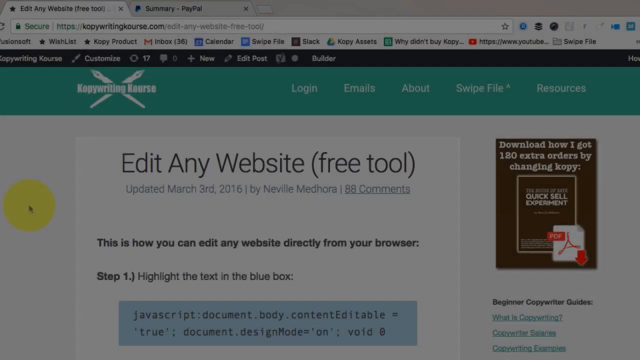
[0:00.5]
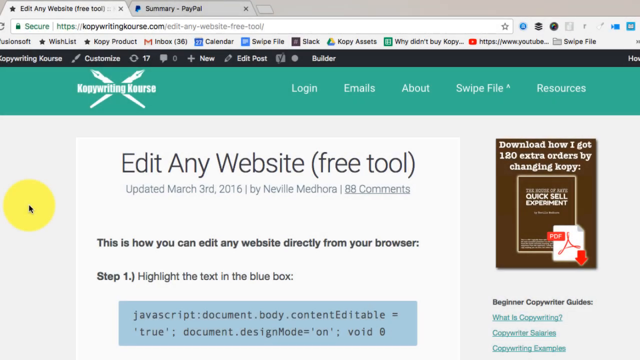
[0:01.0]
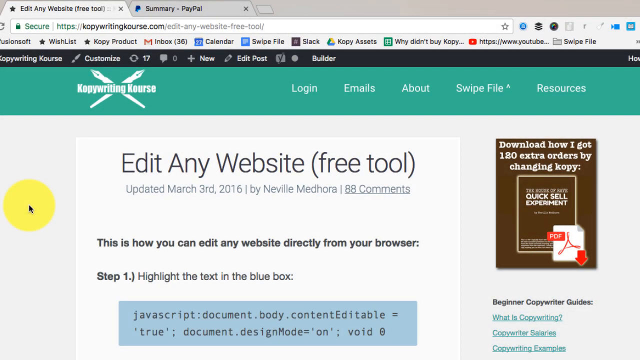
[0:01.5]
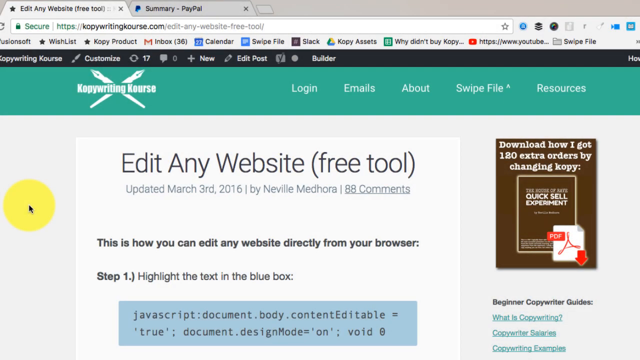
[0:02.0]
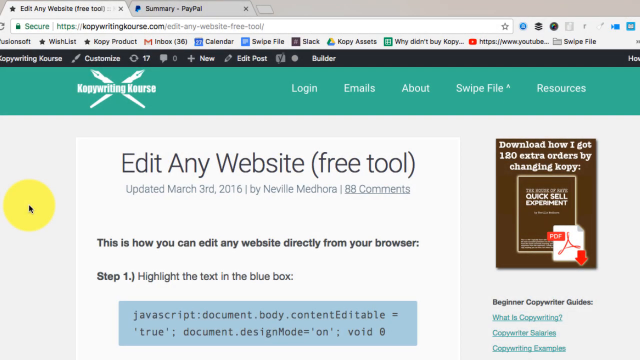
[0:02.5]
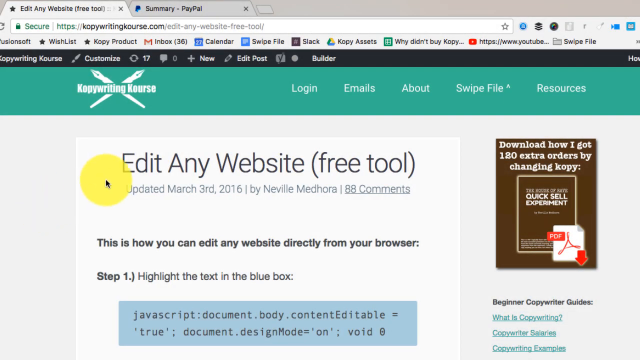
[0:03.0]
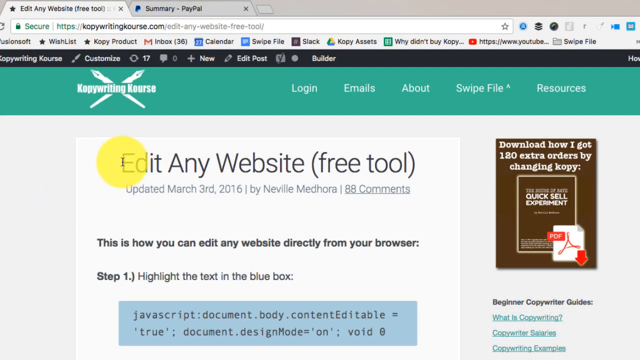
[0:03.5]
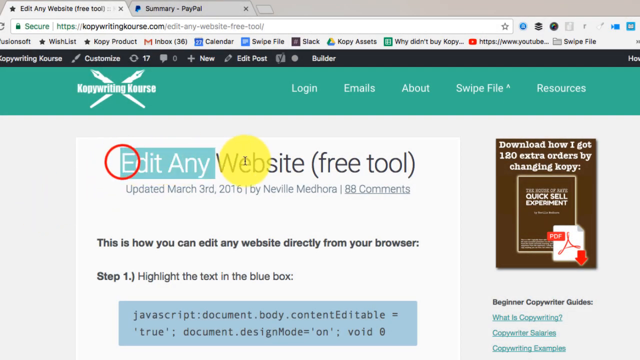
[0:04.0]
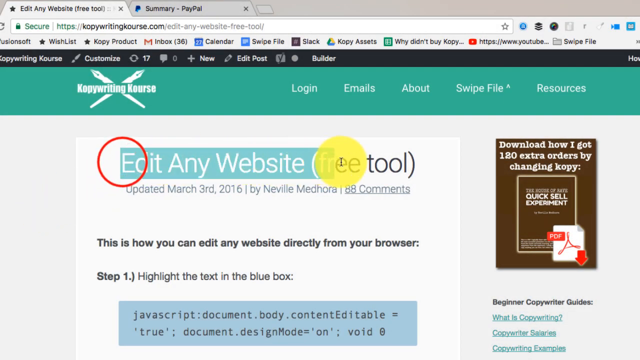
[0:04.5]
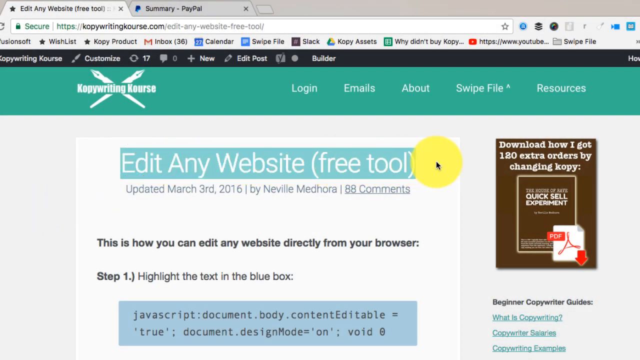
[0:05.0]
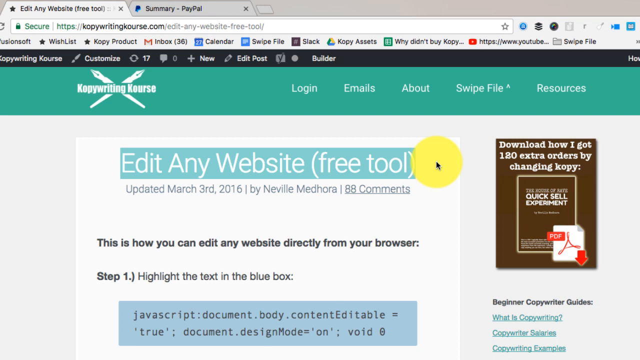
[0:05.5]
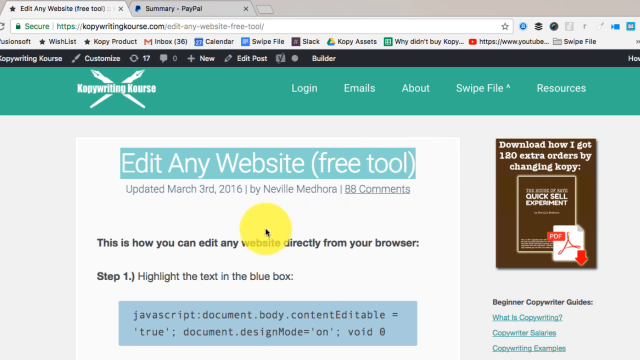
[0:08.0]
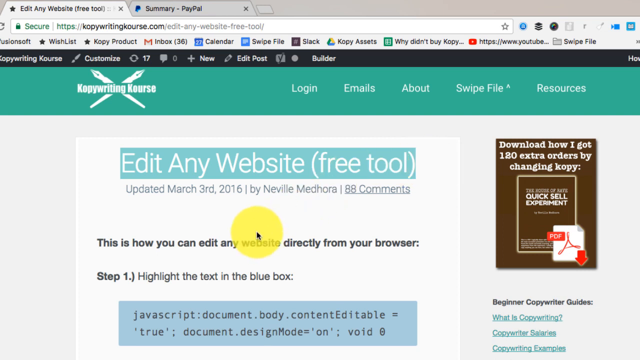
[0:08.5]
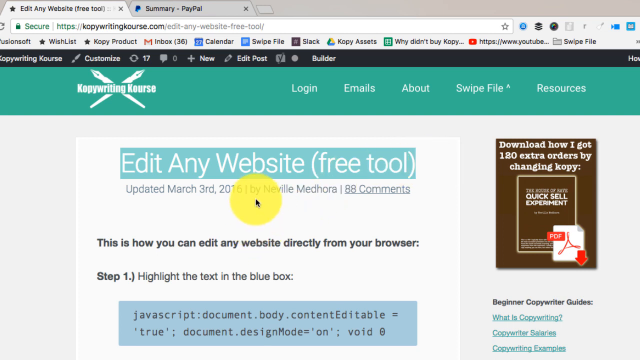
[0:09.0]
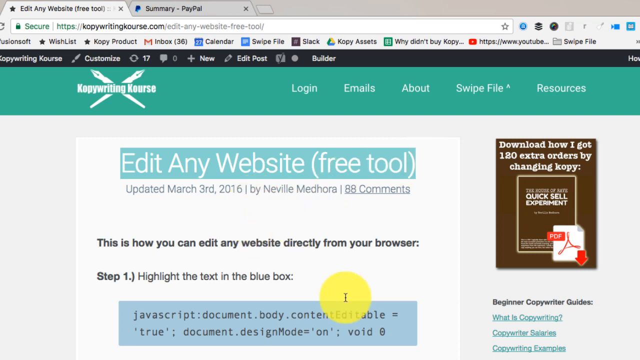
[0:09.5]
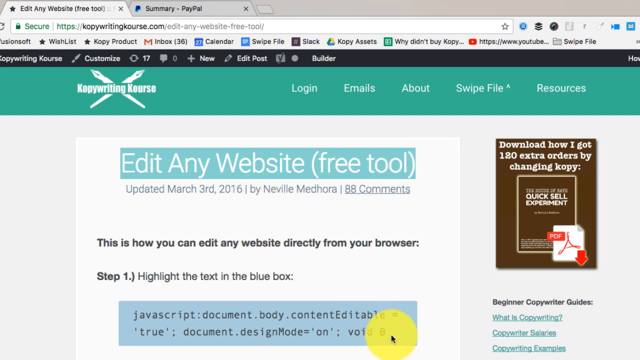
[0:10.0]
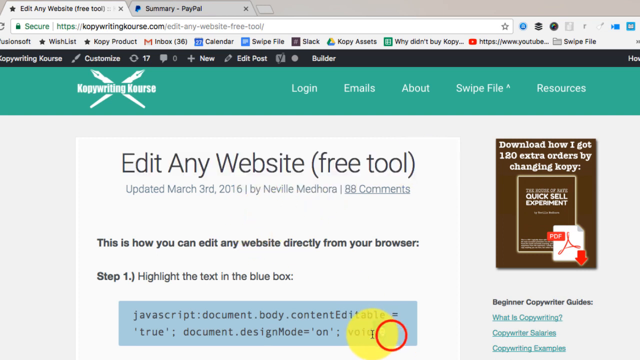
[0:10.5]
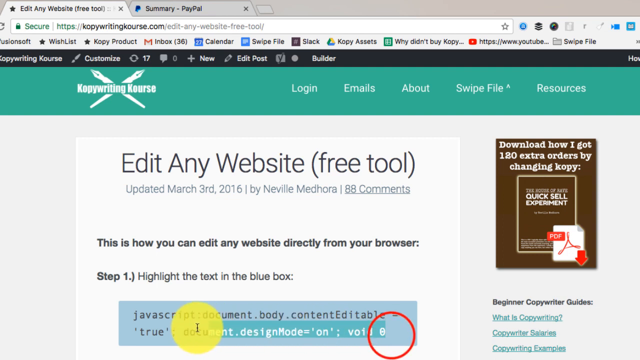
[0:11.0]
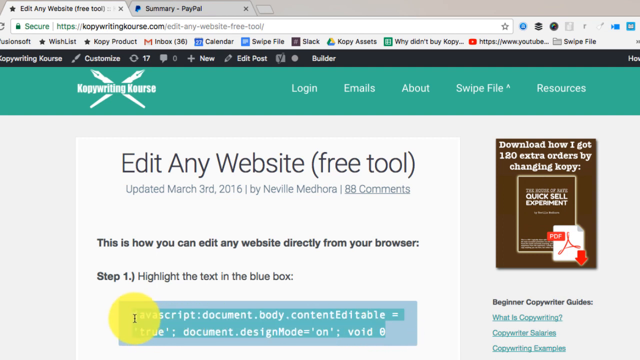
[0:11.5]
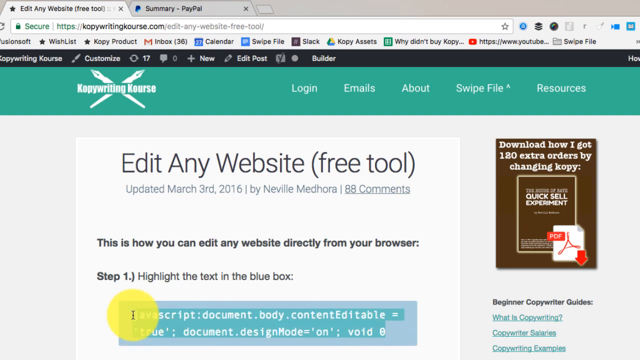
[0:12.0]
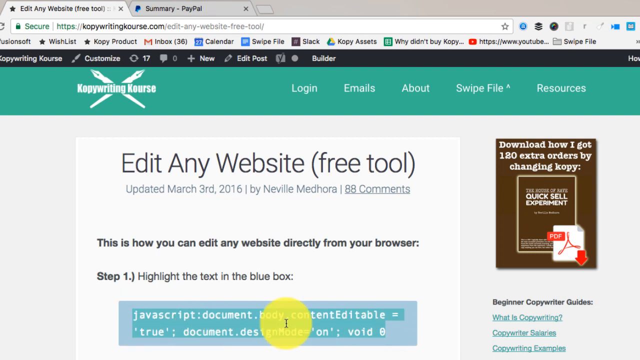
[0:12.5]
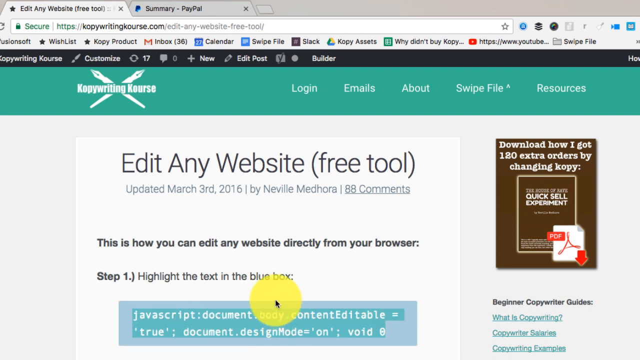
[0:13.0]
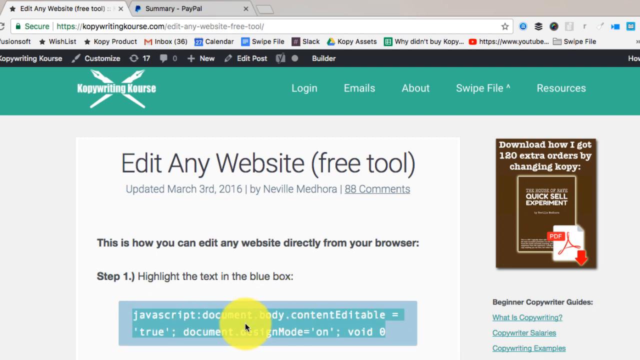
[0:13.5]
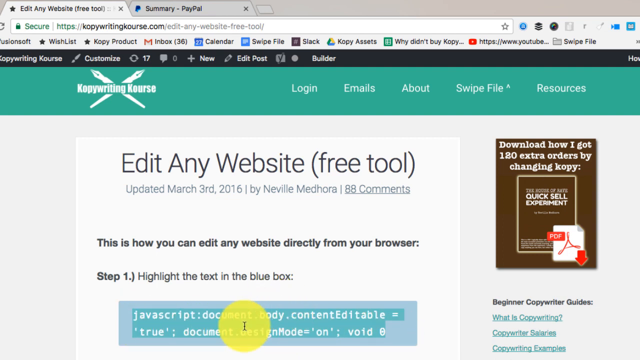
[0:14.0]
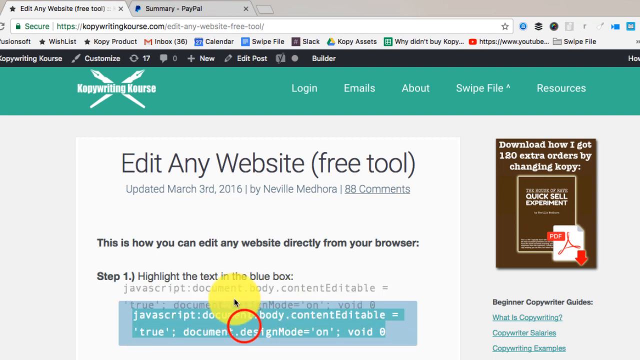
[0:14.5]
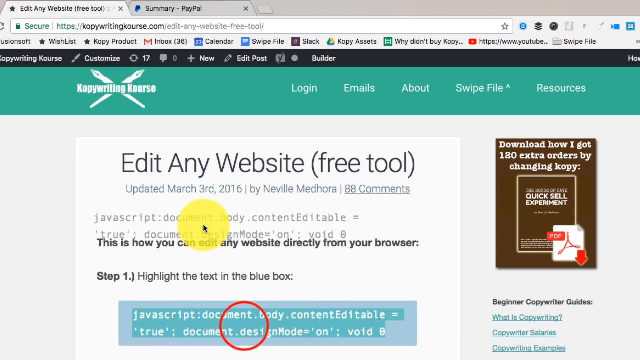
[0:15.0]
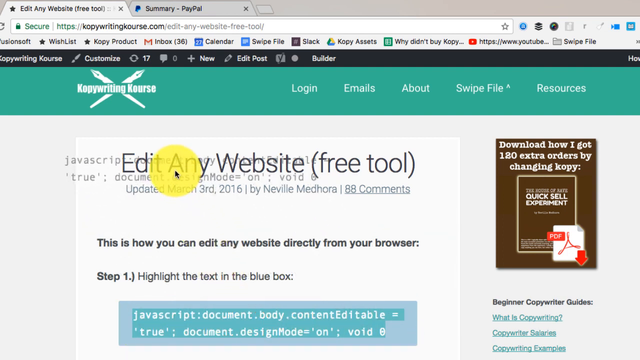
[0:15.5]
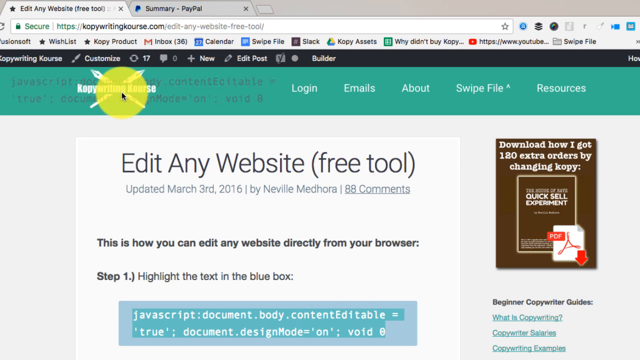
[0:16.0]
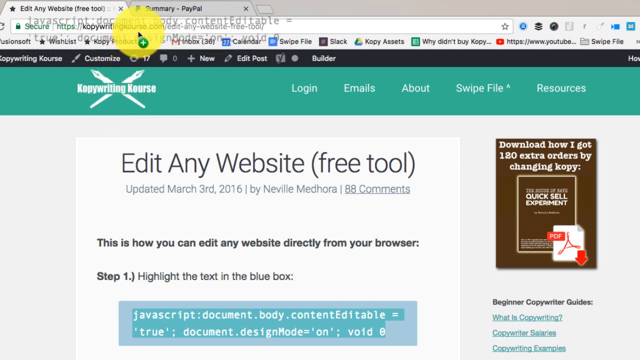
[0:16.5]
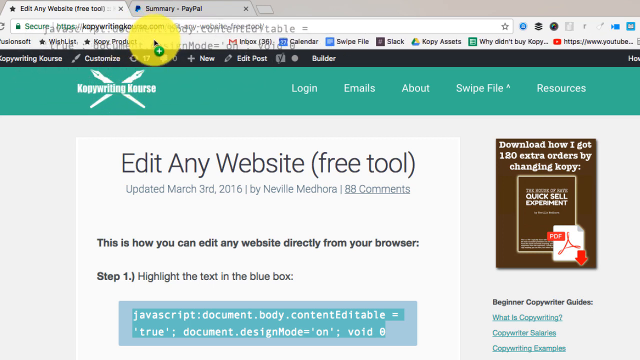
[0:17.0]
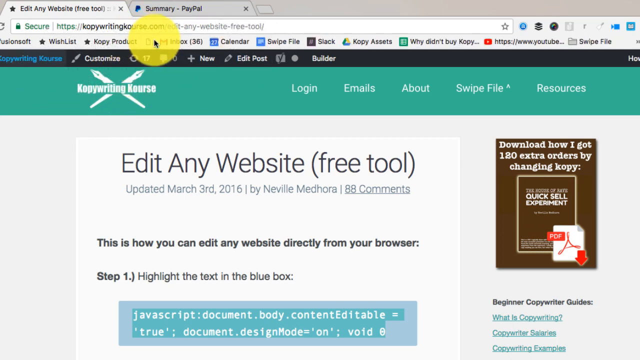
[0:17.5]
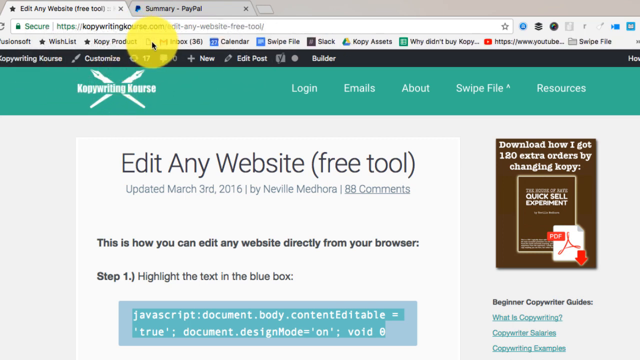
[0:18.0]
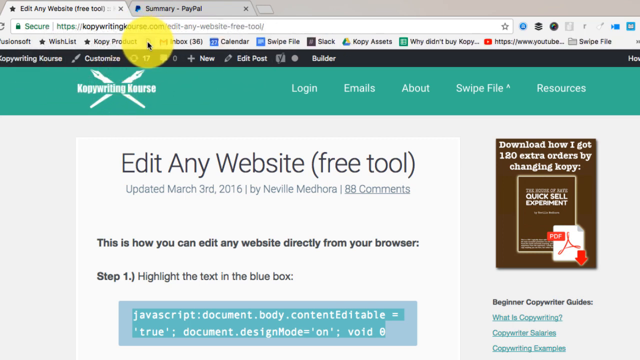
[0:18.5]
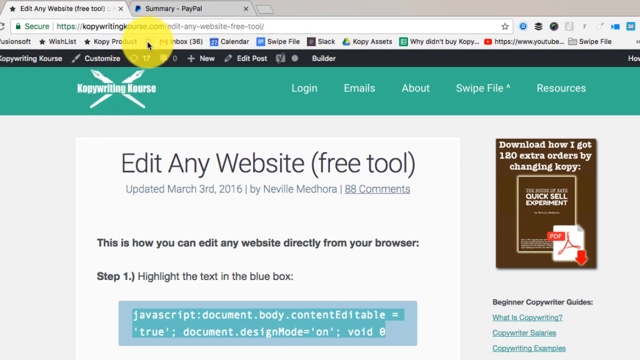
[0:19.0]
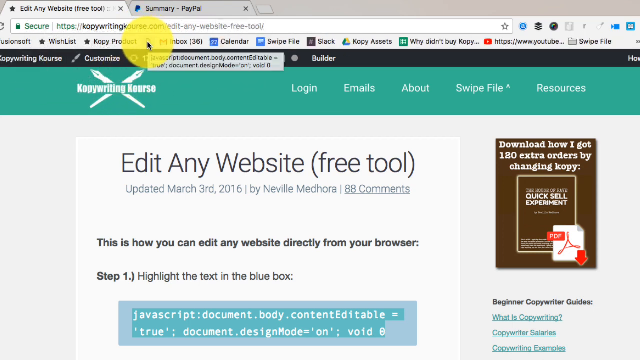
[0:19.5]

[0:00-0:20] A computer screen is open to a site called Kopywritingkourse.com. In the upper left-hand corner of the navigation bar is "Kopywriting Kourse," with a logo of two dip pens crossed behind the title of the course. A cursor with a yellow circle around it highlights the page header, which reads "Edit Any Website (free tool)." Below this the text says "This is how you can edit any website directly from your browser: Step 1) Highlight the text in the blue box." The cursor moves down to the blue box, which contains lines of JavaScript, highlights it, and the text is copied and moved by the cursor to the top of the page. On the right side of the page are links to additional copywriting guides, which are PDF files.